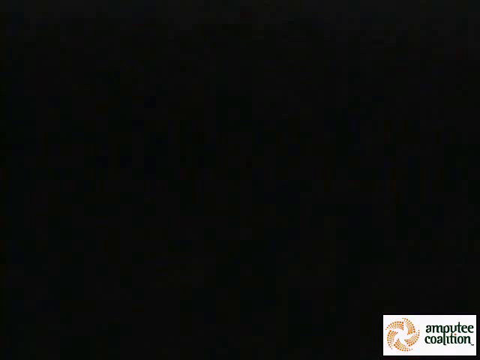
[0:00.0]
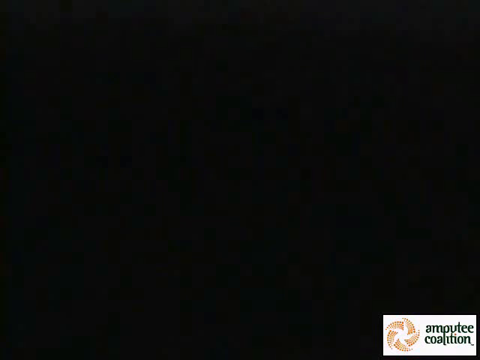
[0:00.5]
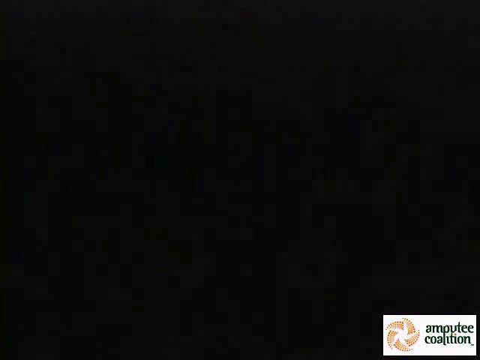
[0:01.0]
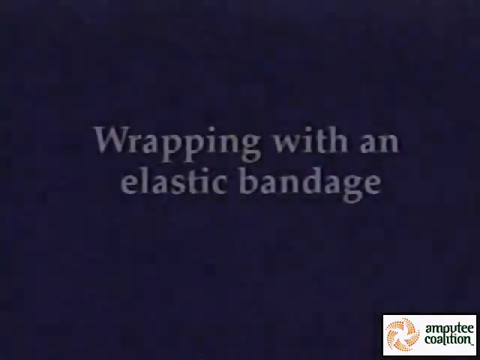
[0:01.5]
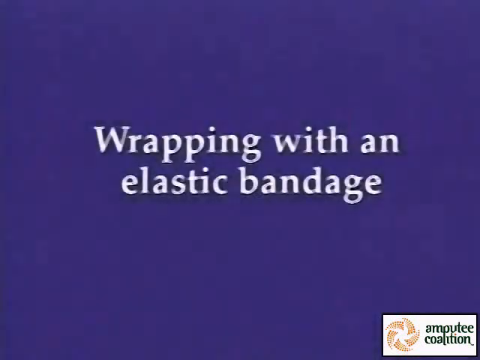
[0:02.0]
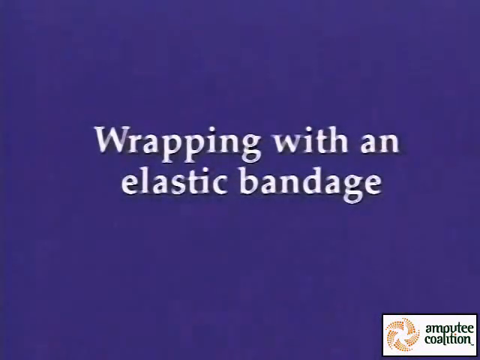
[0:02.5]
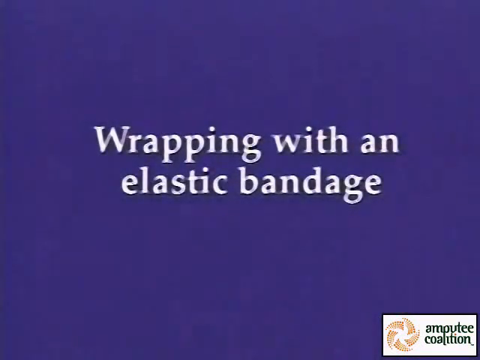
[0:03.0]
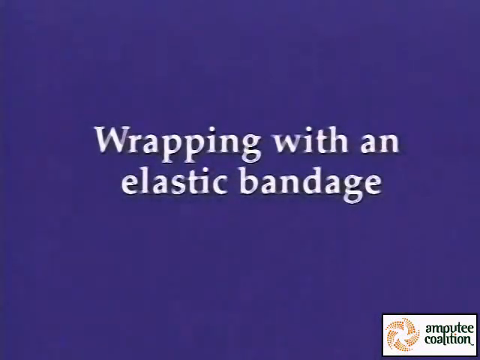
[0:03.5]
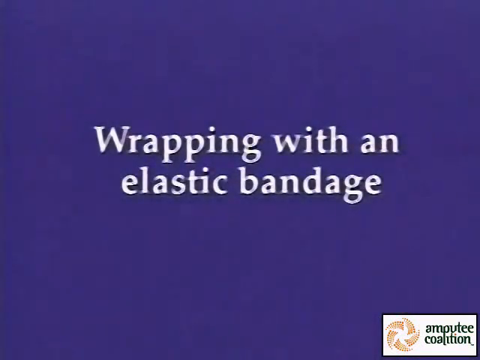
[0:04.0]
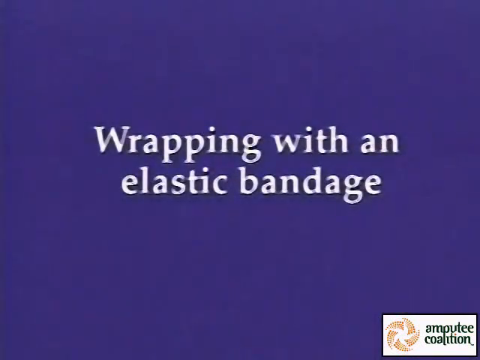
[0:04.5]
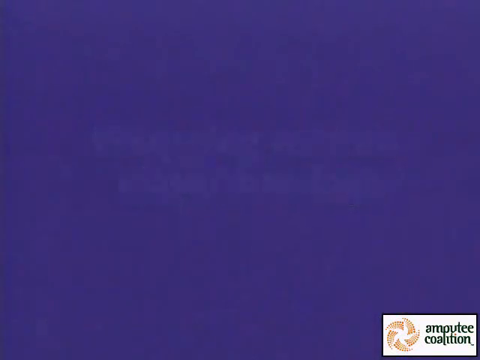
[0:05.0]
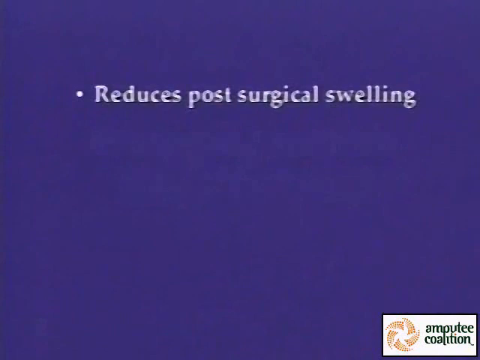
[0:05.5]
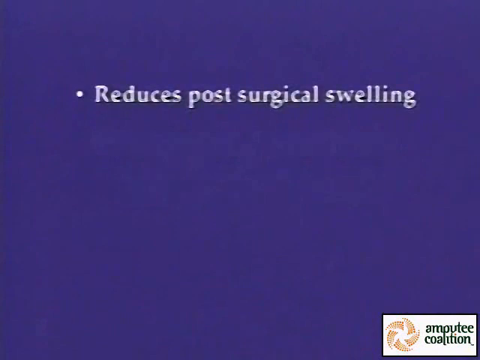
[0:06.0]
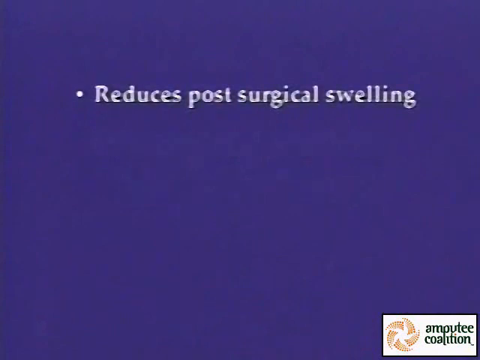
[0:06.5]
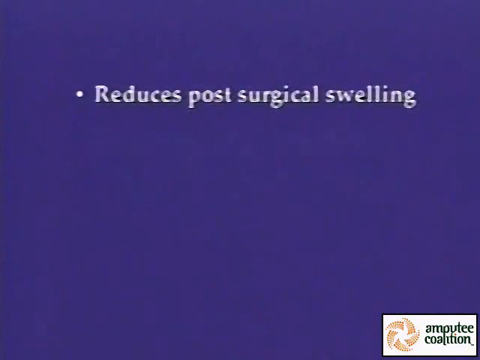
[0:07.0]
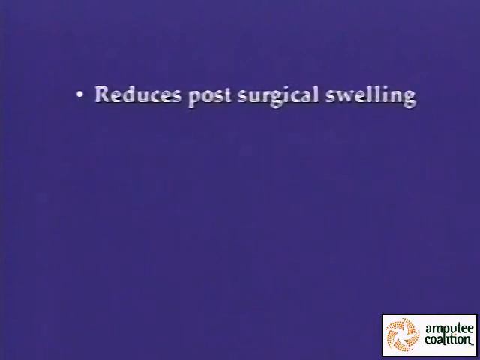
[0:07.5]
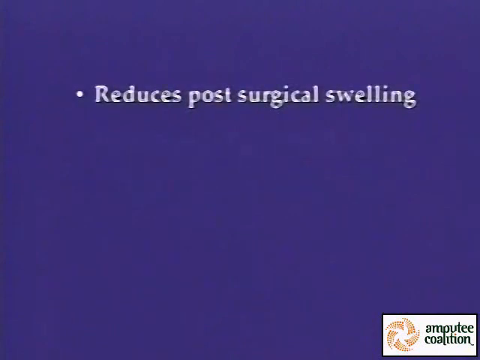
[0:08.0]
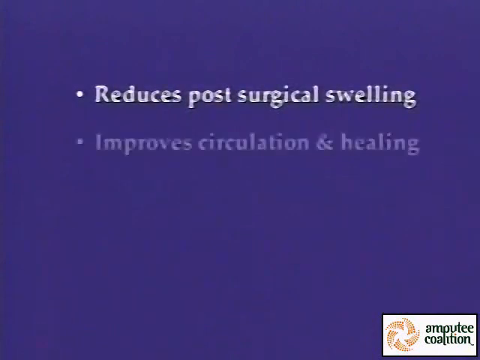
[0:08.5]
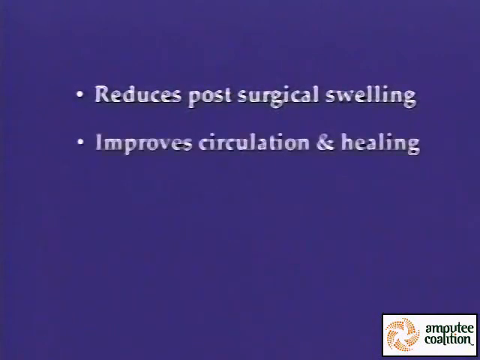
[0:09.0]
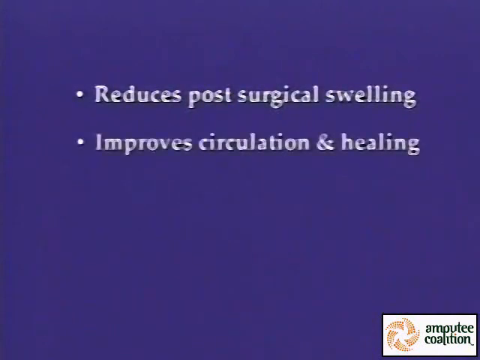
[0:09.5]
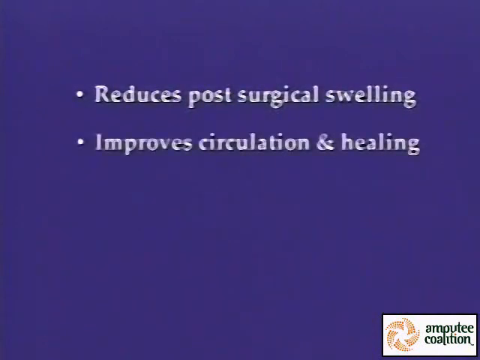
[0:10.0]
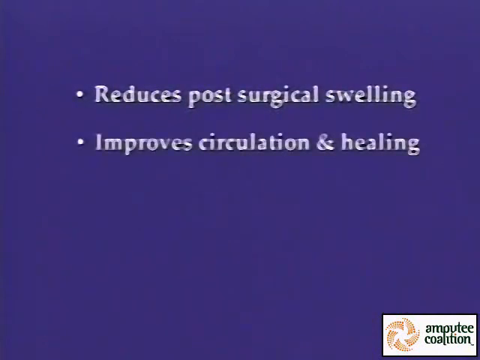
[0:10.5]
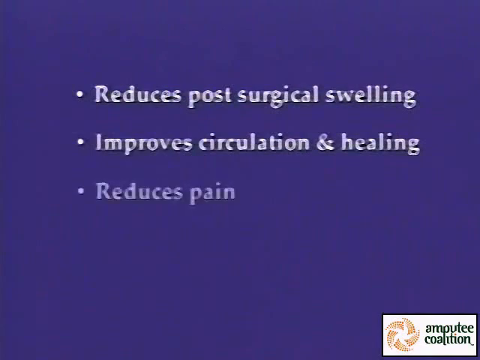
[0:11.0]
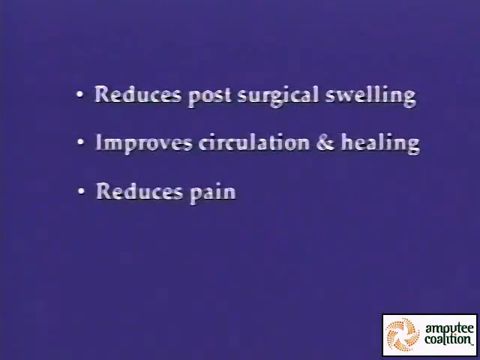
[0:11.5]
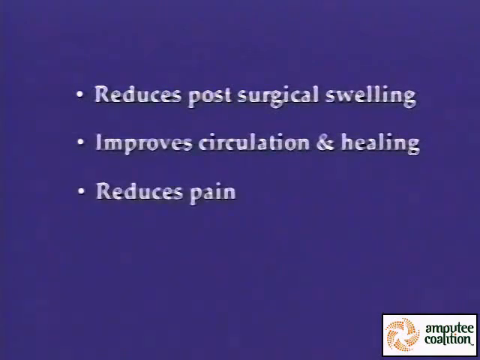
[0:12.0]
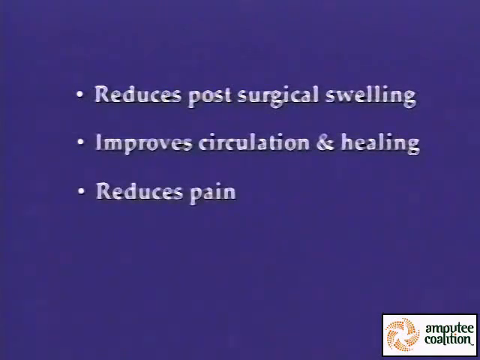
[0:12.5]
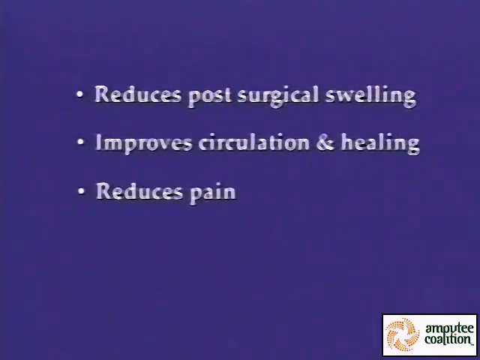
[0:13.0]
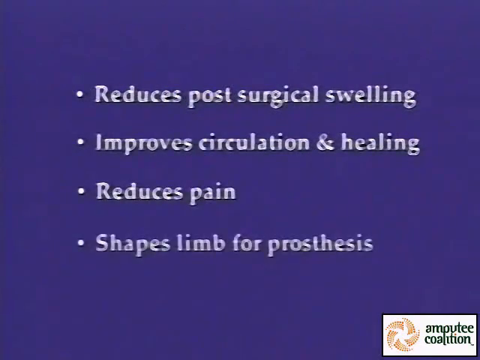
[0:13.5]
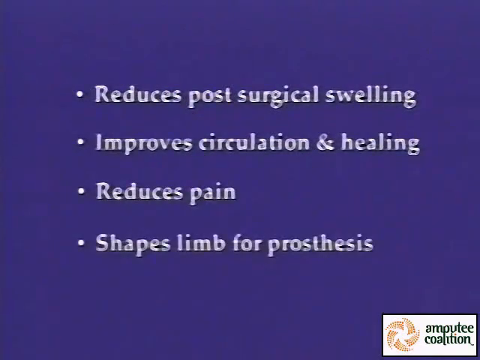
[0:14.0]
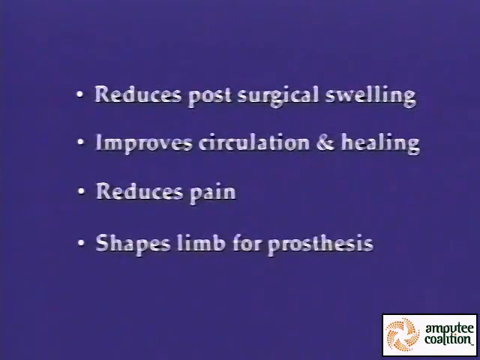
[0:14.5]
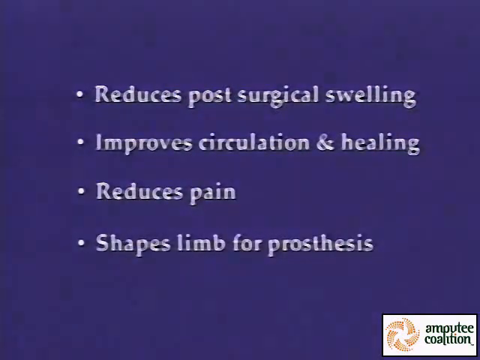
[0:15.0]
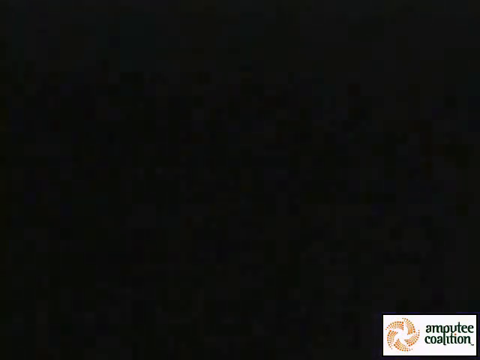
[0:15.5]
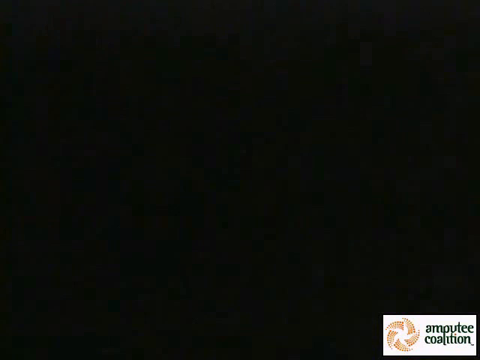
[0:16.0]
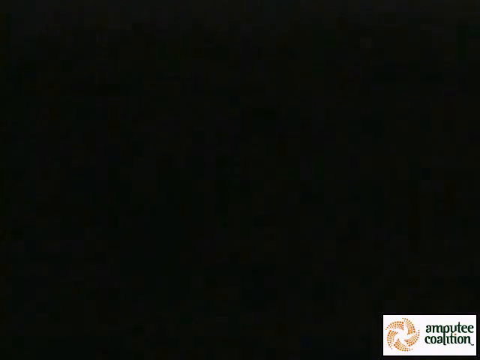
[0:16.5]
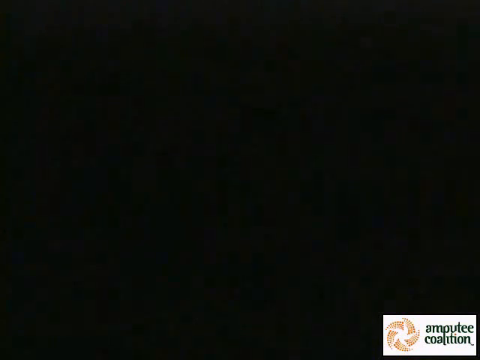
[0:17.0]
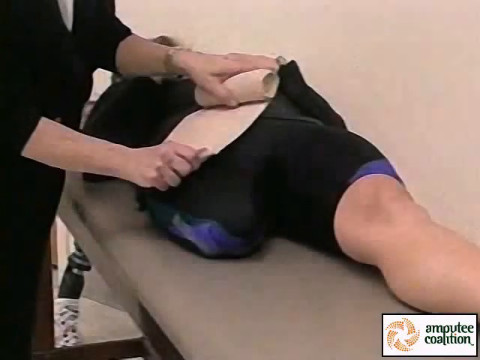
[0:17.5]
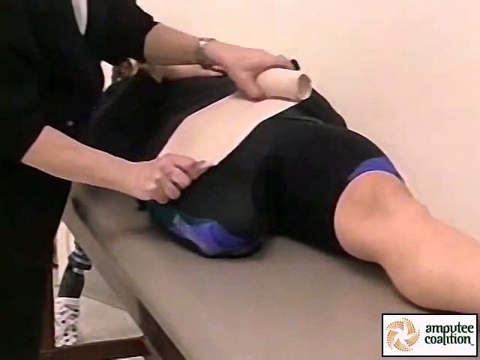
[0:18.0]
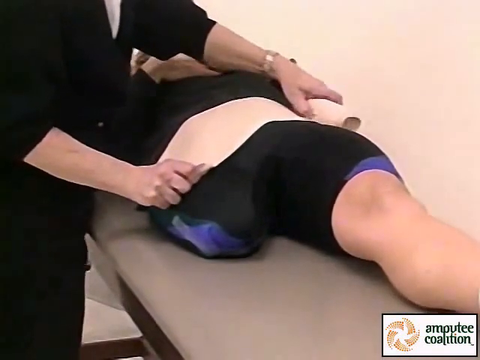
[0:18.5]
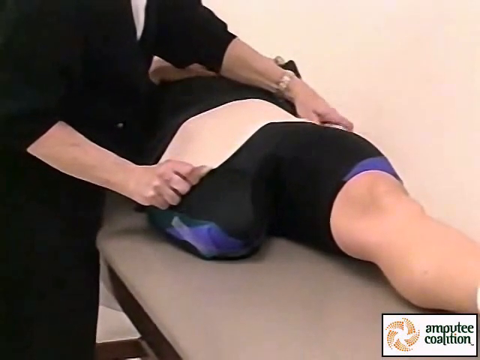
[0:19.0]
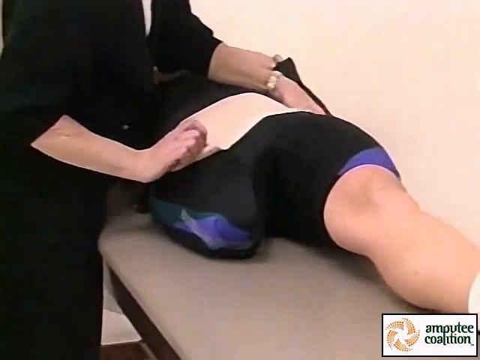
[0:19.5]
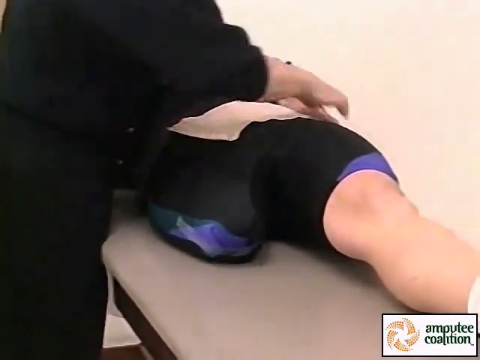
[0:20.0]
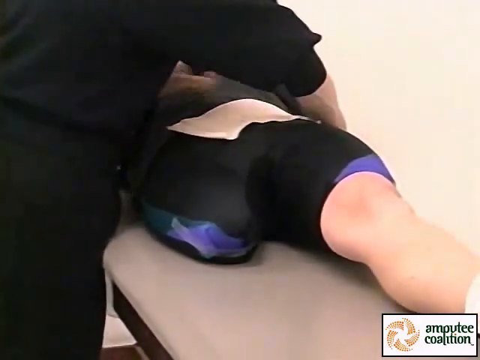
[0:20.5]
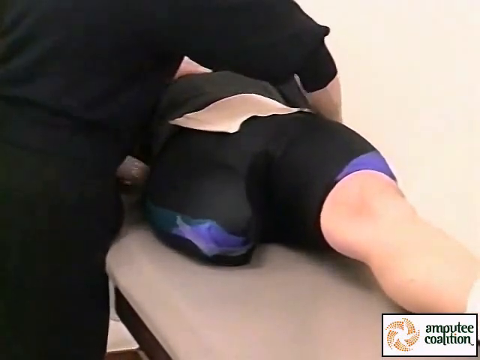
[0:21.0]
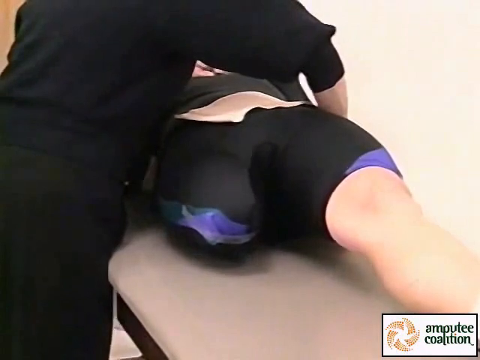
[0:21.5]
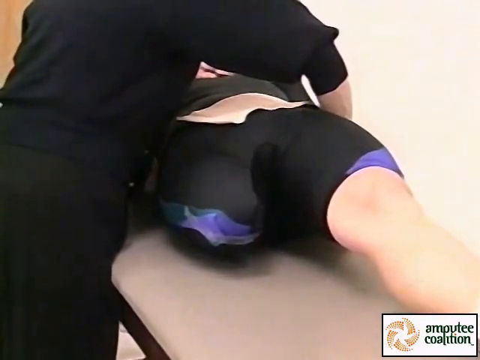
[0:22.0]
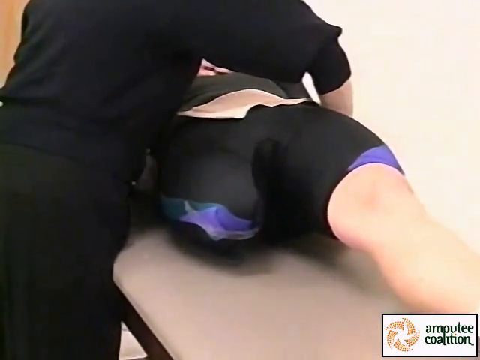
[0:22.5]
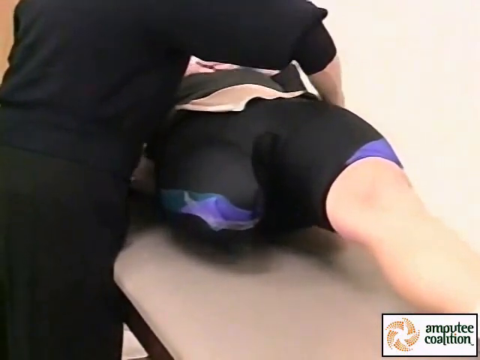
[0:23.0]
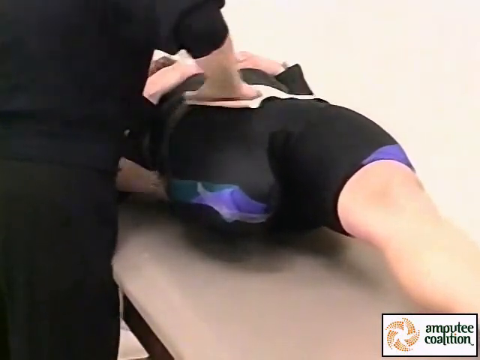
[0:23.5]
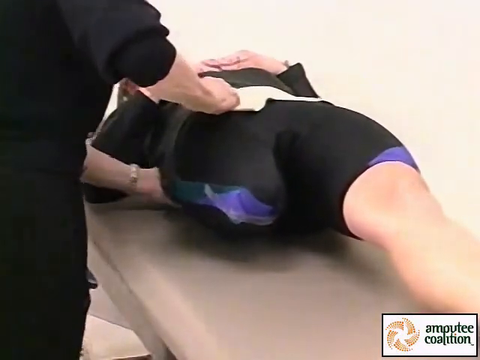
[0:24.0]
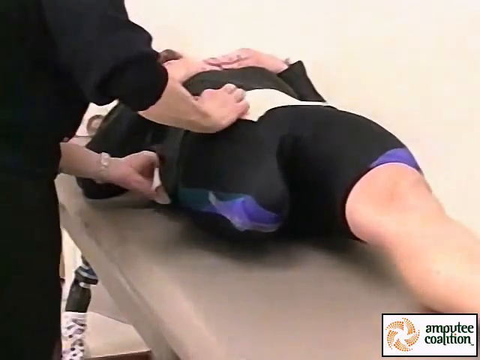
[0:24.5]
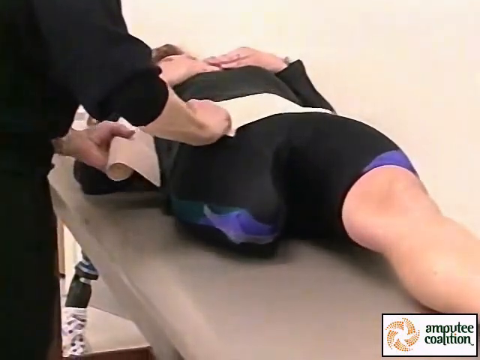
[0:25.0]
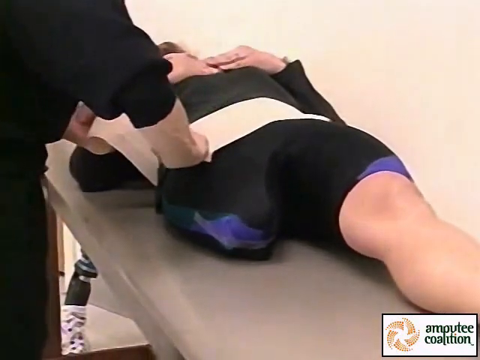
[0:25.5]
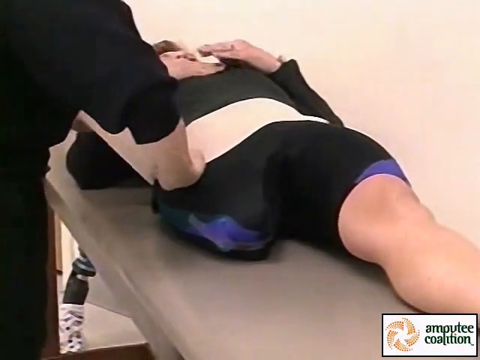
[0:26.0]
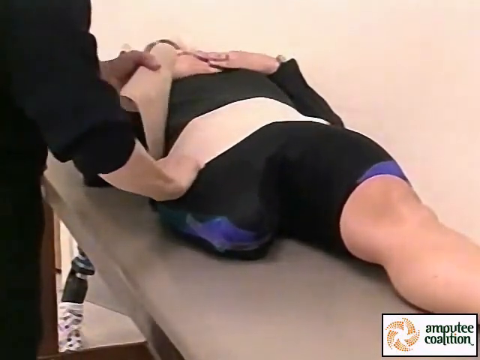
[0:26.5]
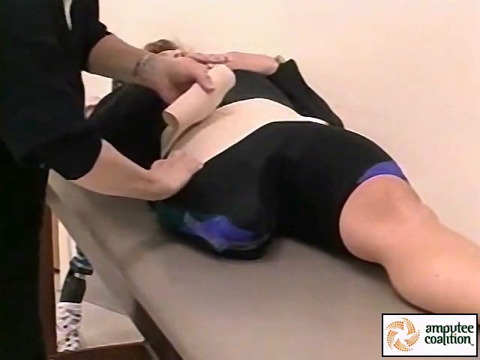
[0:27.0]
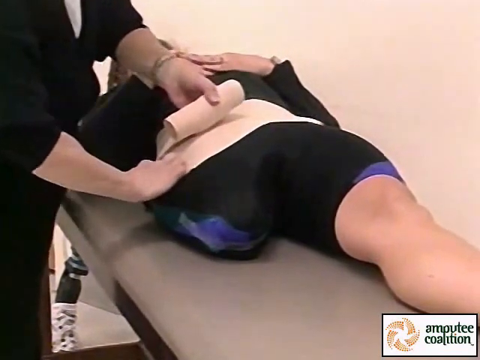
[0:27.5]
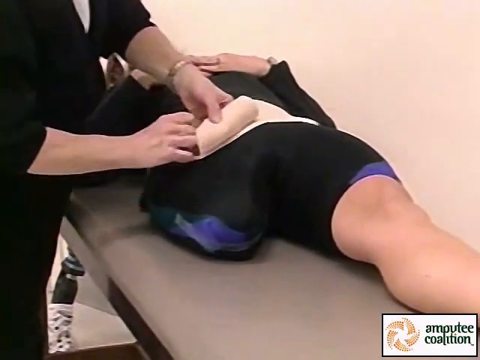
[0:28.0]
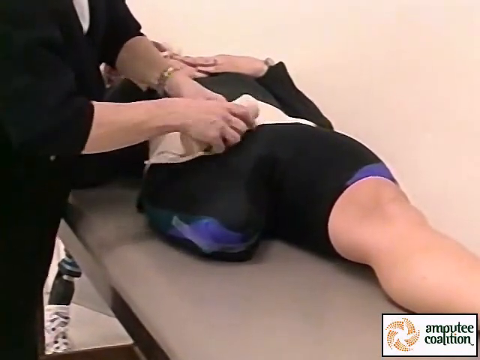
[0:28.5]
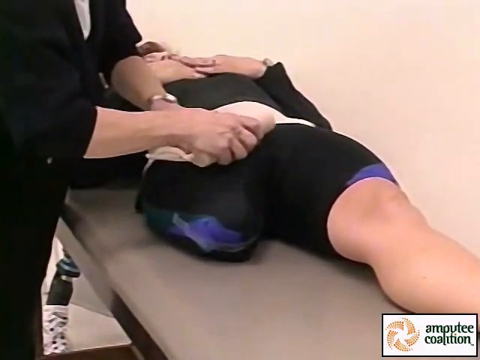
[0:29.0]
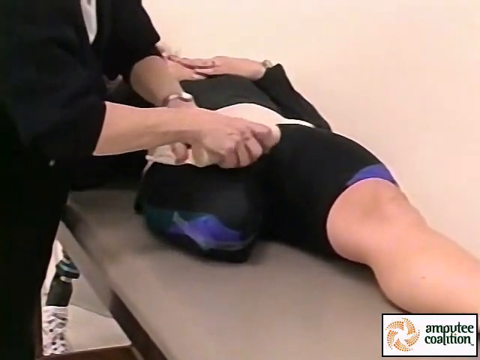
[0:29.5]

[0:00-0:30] The video opens on a solid purple screen with white text across it reading "wrapping with an elastic bandage." Text then lists "reduces post-surgical swelling, improves circulation and healing, reduces pain, shapes limbs for prosthesis." Next, a person lies on their back on a little gray bed, wearing a black top and tight black spandex pants; they have only a left leg and are missing their right leg. A person dressed all in black stands on the left side of the bed and wraps an ace bandage around the abdomen of the person lying down. The person on the bed leans up, and the other person wraps the ace bandage underneath them. The person doing the wrapping then wraps over where the missing leg is supposed to be.